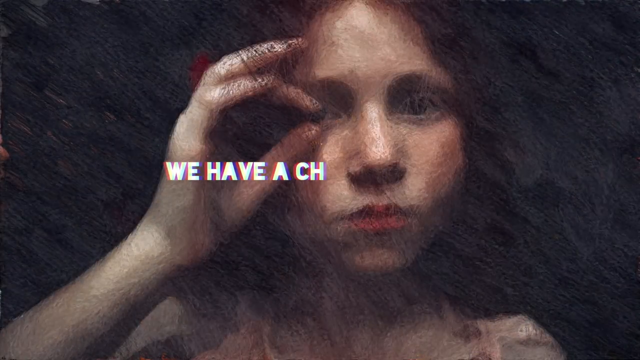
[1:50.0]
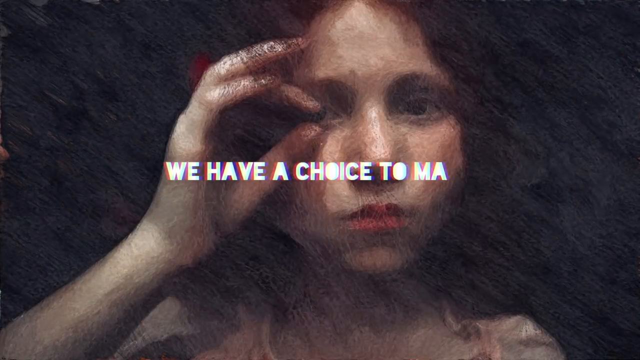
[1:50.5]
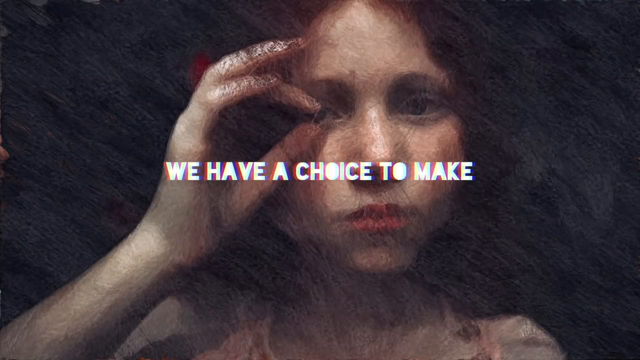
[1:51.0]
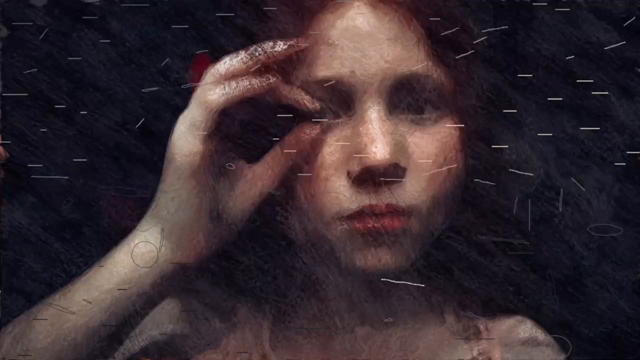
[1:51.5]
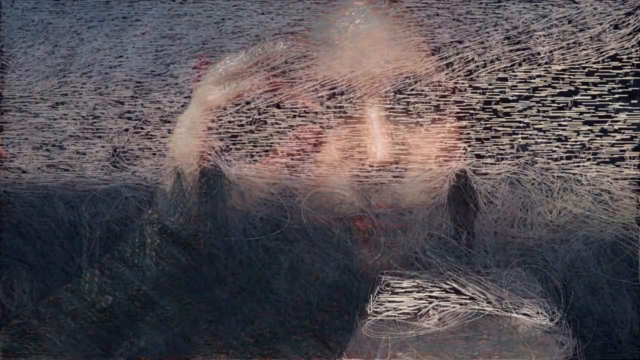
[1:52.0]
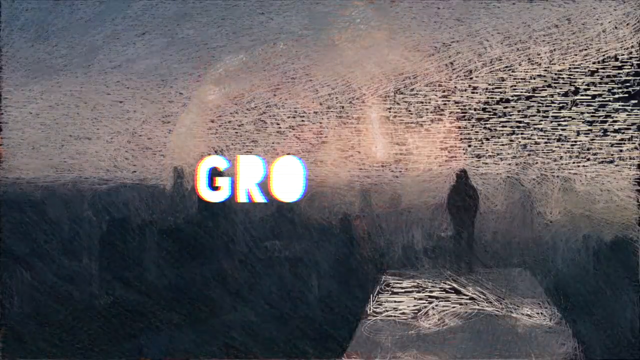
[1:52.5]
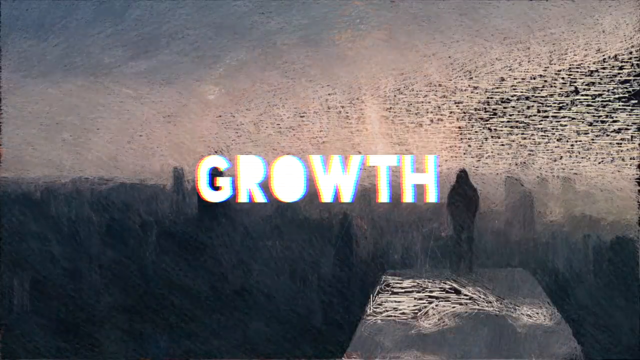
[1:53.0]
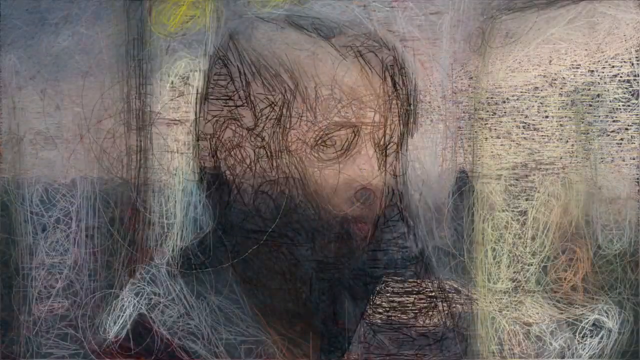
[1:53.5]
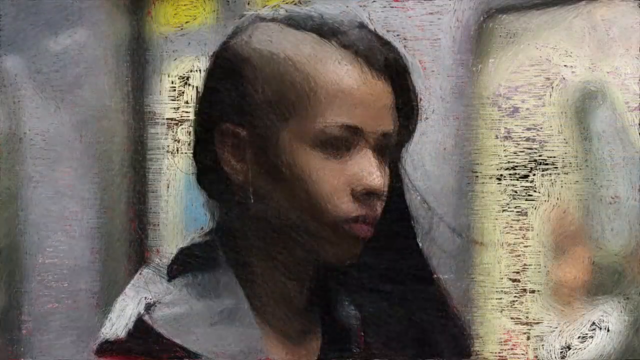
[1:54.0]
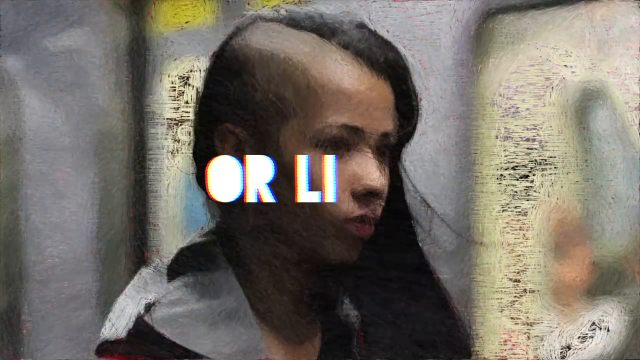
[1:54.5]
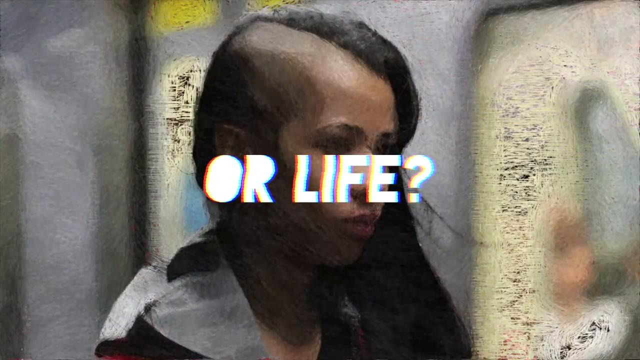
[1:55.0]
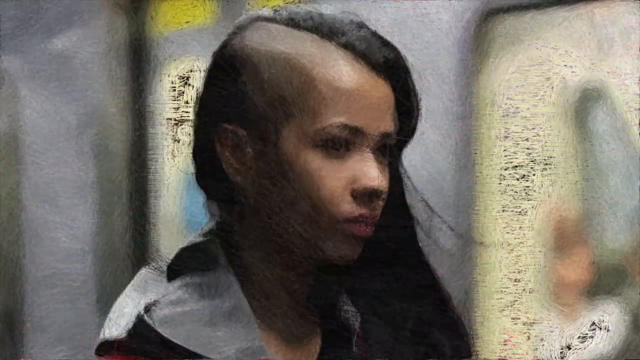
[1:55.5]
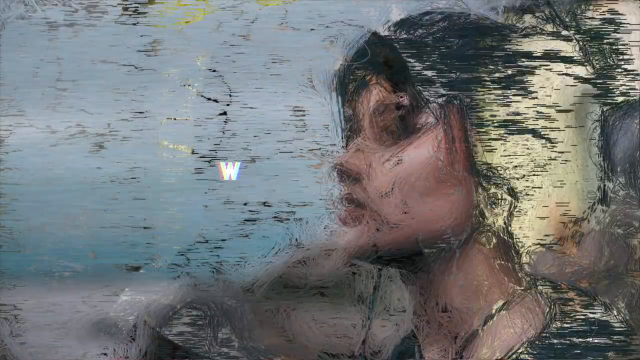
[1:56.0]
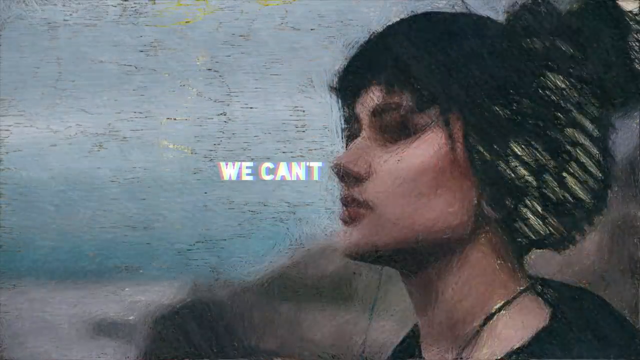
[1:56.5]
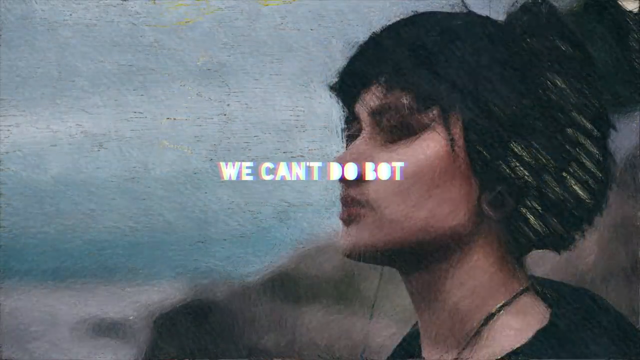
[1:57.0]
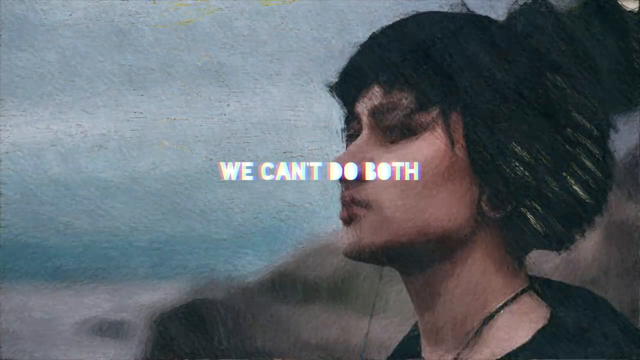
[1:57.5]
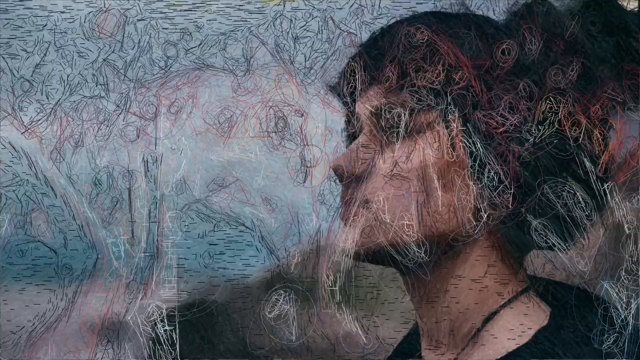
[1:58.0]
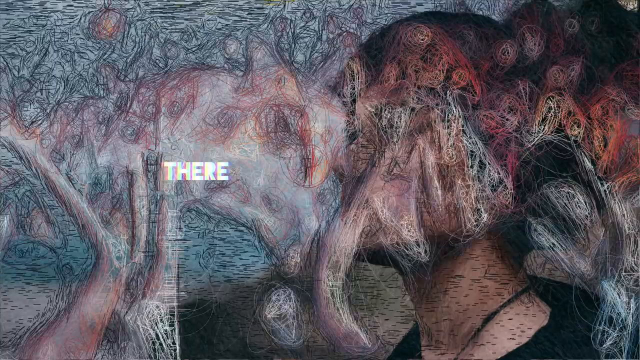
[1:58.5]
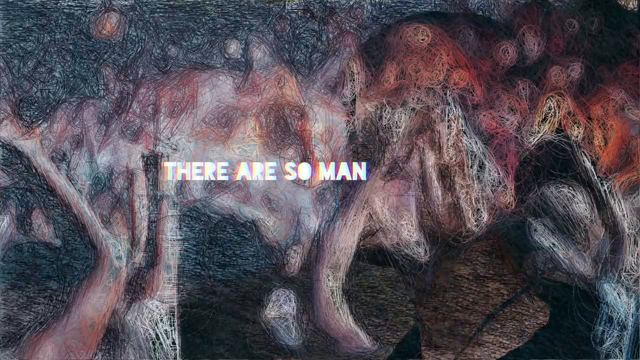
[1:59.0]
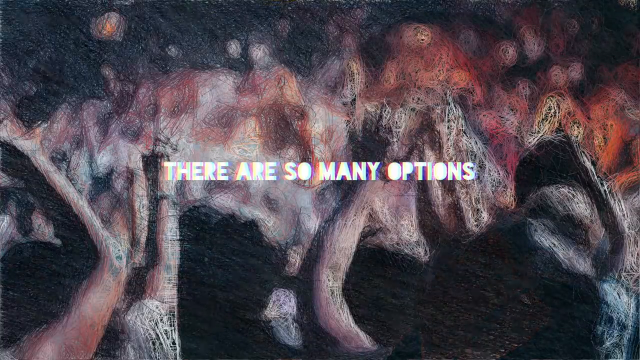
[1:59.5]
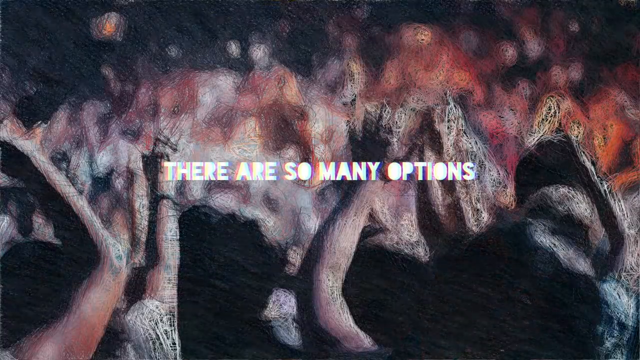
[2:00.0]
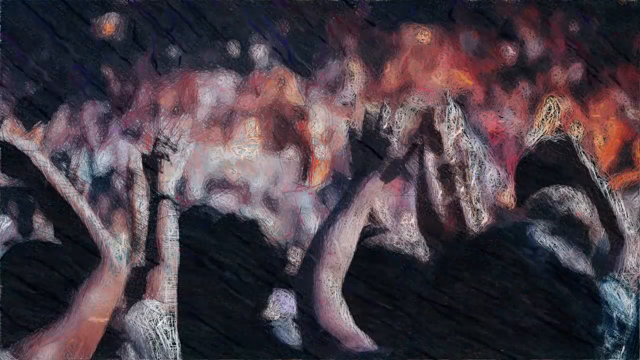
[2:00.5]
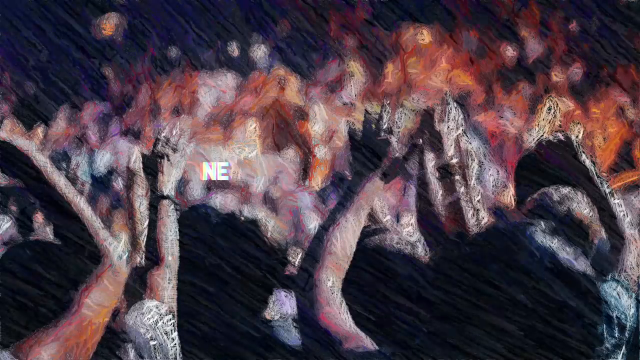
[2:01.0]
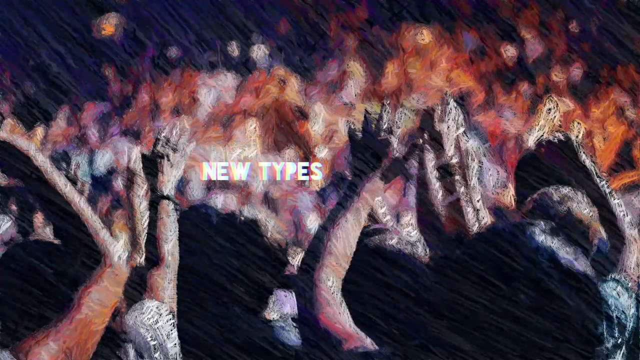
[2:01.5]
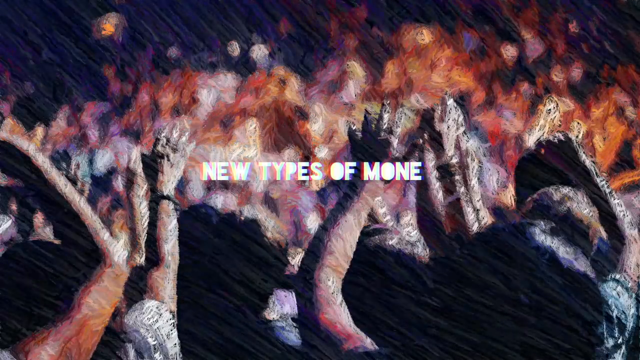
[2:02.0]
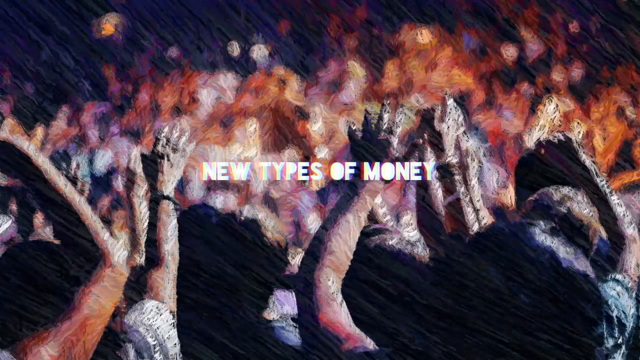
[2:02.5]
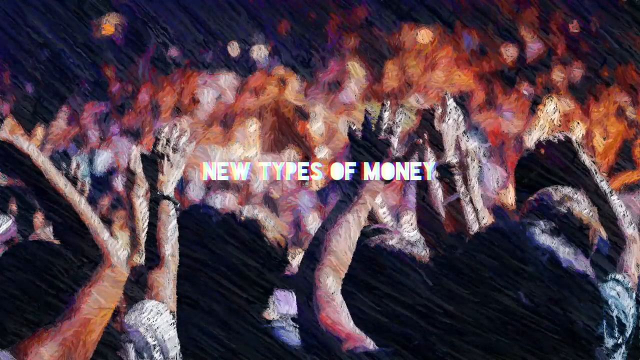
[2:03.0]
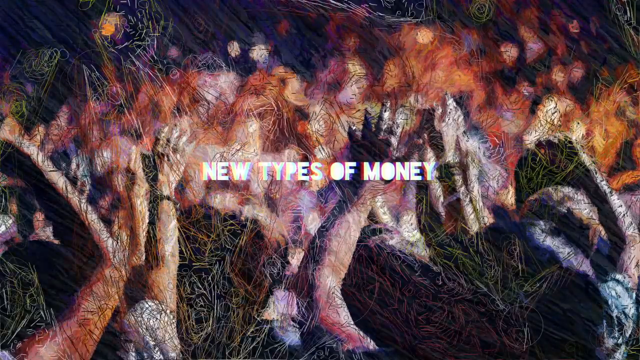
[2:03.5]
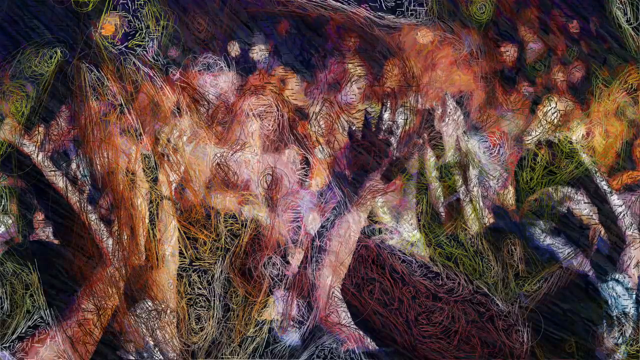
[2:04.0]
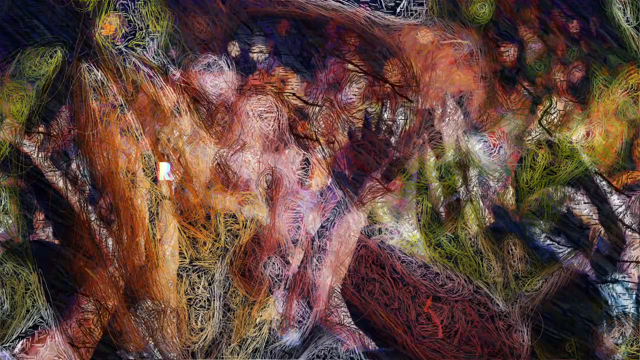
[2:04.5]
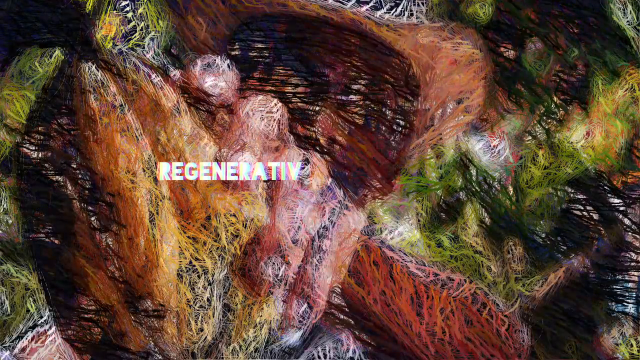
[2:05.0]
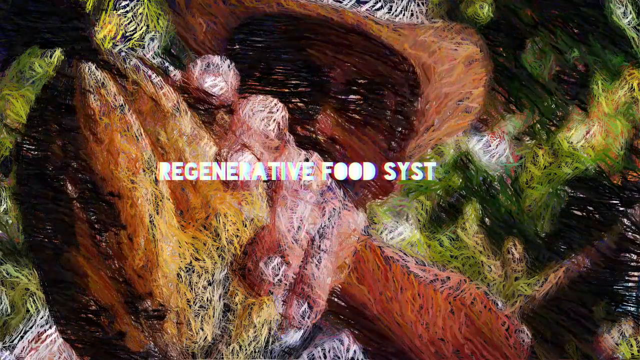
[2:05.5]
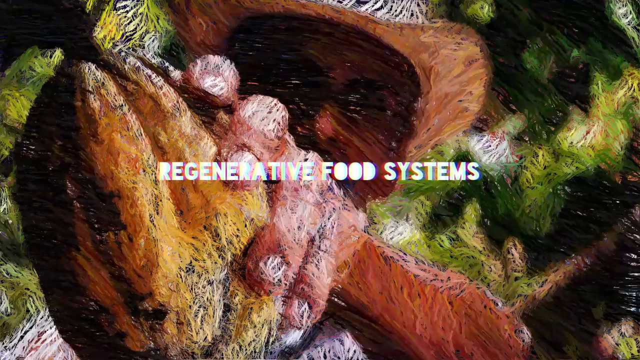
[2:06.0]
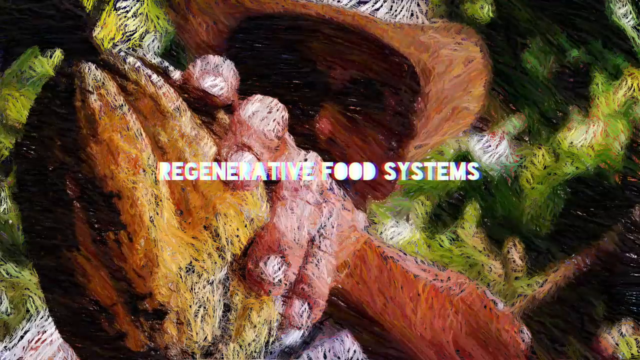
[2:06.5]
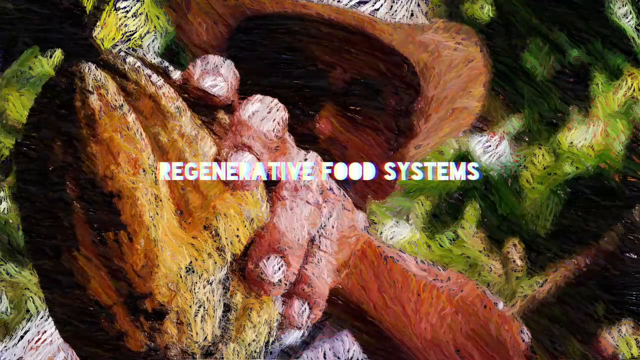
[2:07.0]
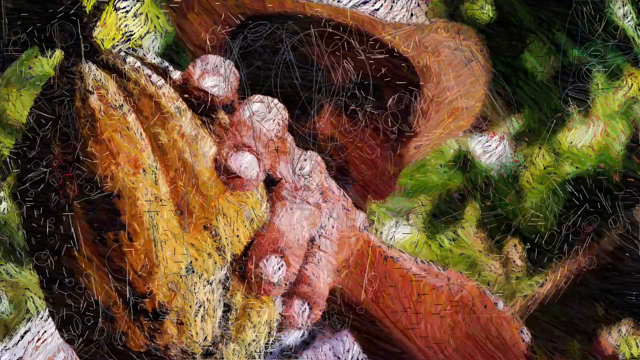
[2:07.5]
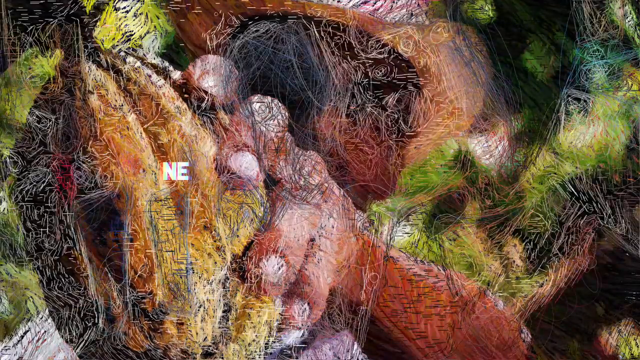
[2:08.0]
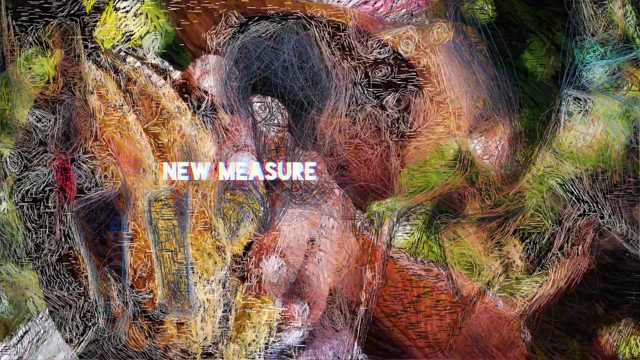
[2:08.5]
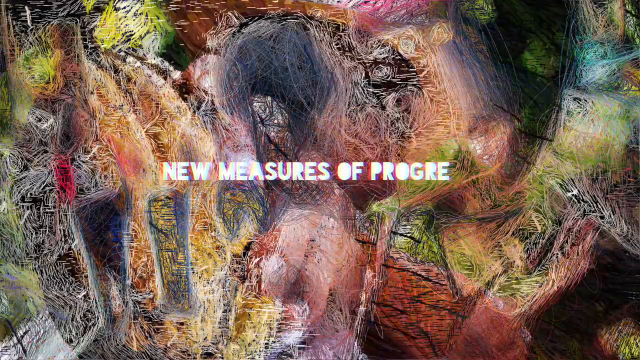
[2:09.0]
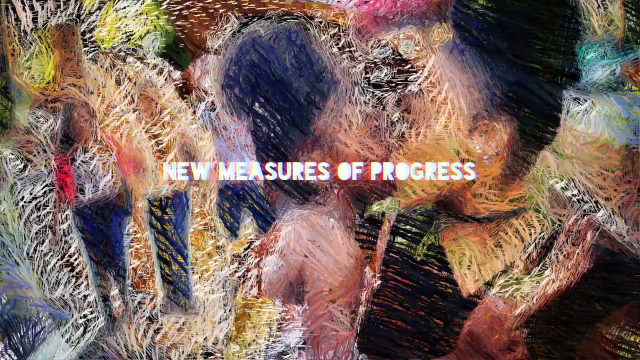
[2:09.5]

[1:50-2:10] Black and poor people are shown. On-screen text says "we have a choice to make growth or life" and lists options: "new types of money", "regenerative food systems", "new measures of progress".